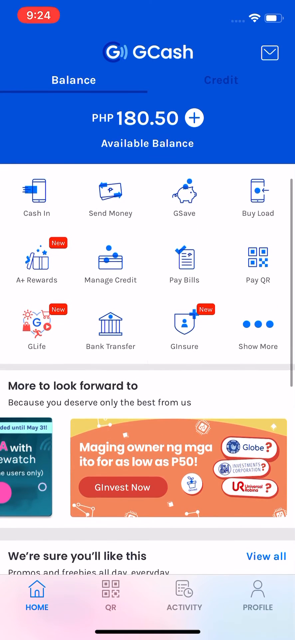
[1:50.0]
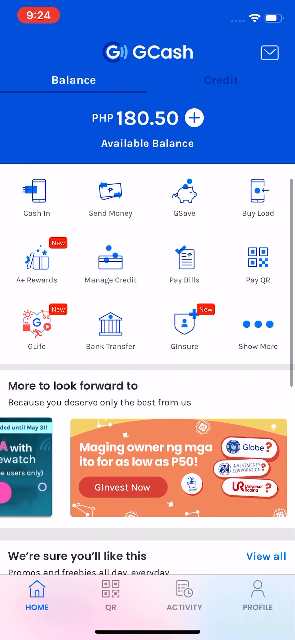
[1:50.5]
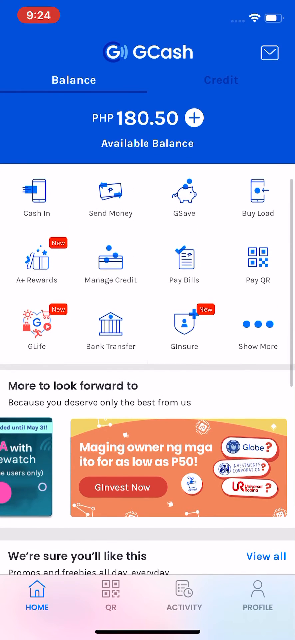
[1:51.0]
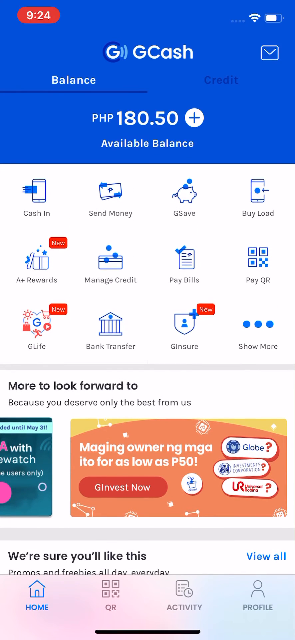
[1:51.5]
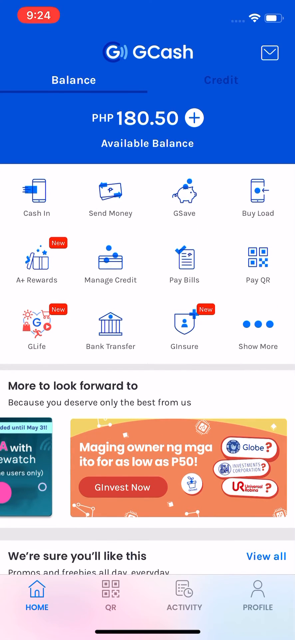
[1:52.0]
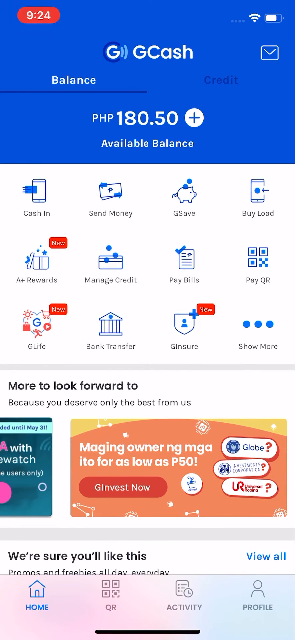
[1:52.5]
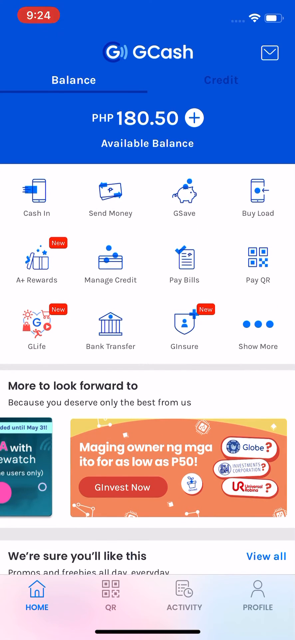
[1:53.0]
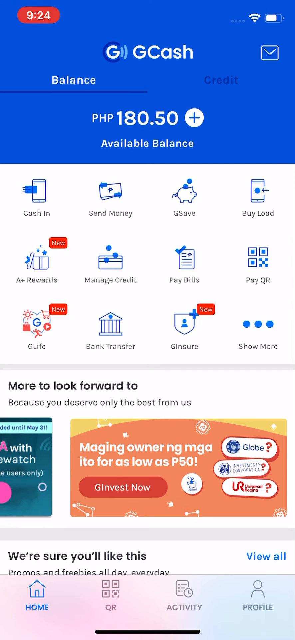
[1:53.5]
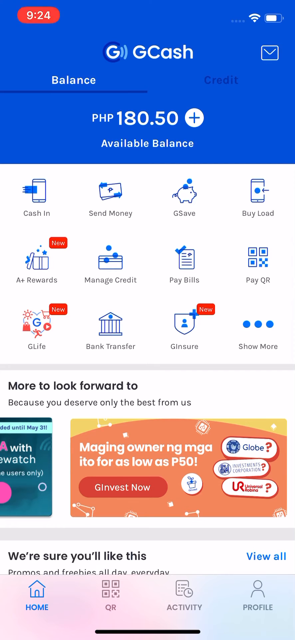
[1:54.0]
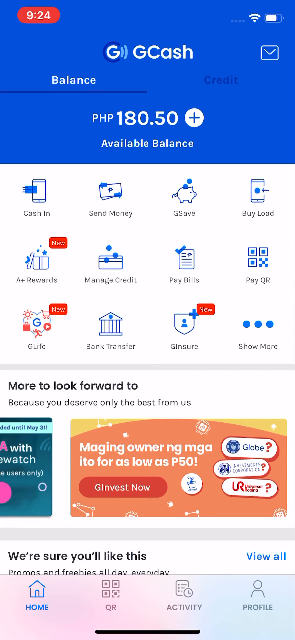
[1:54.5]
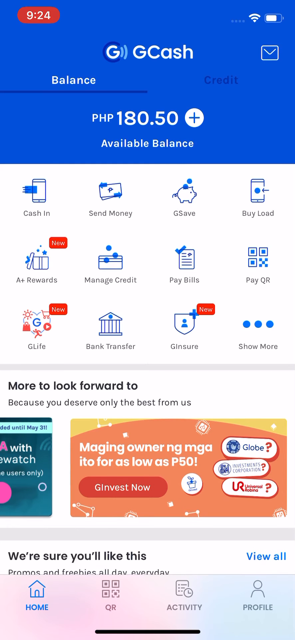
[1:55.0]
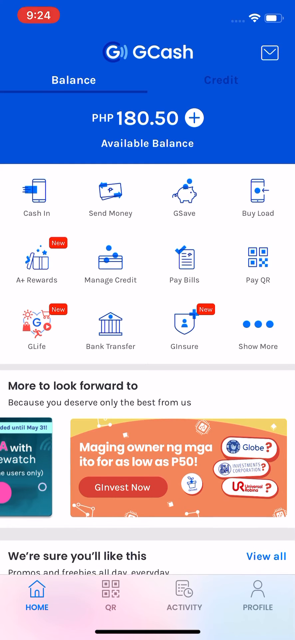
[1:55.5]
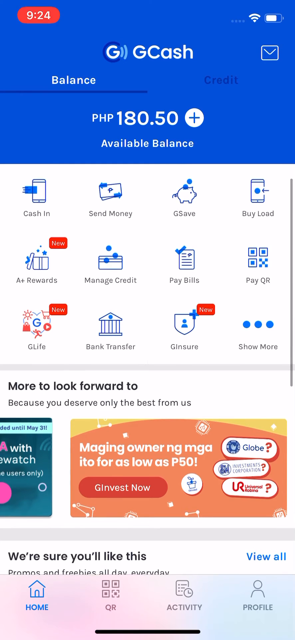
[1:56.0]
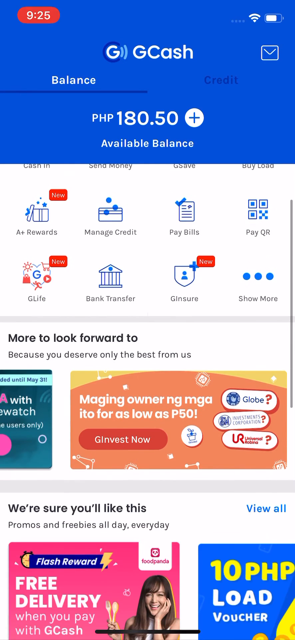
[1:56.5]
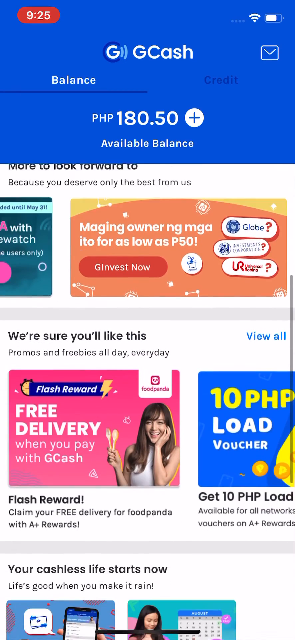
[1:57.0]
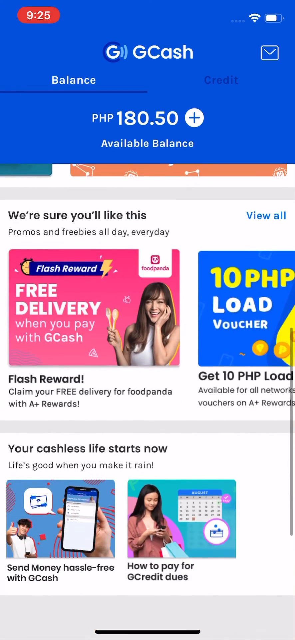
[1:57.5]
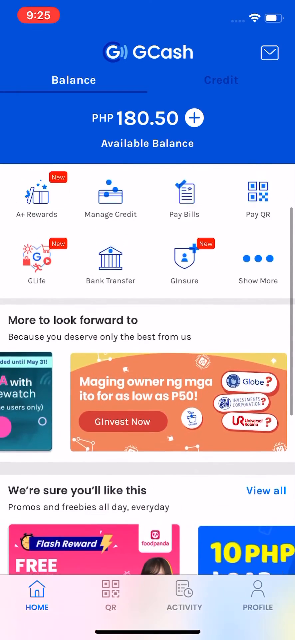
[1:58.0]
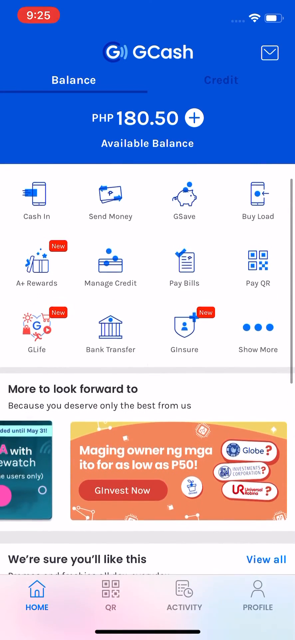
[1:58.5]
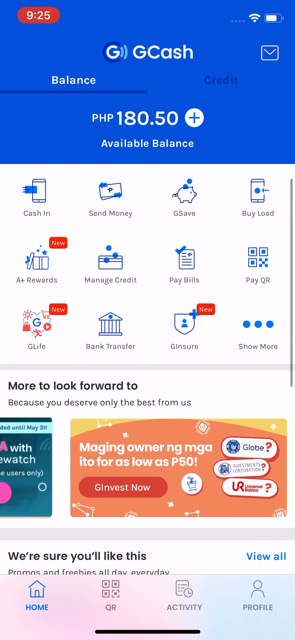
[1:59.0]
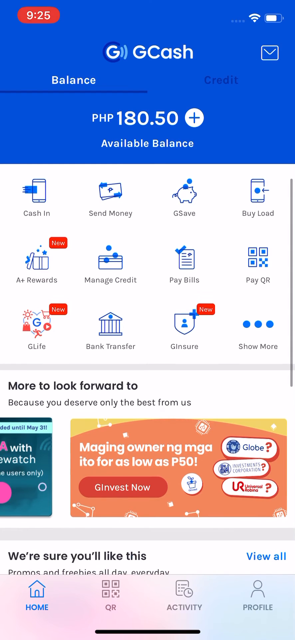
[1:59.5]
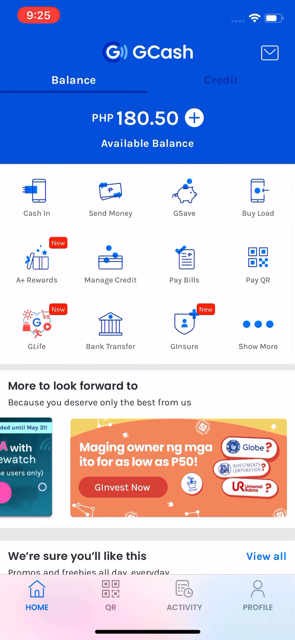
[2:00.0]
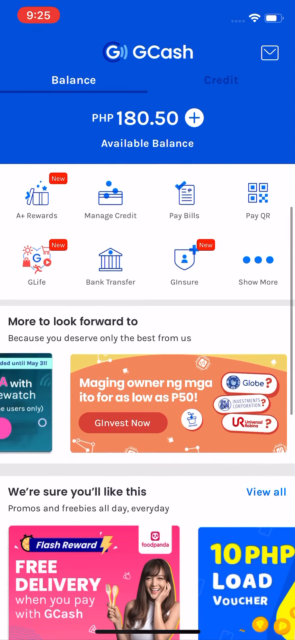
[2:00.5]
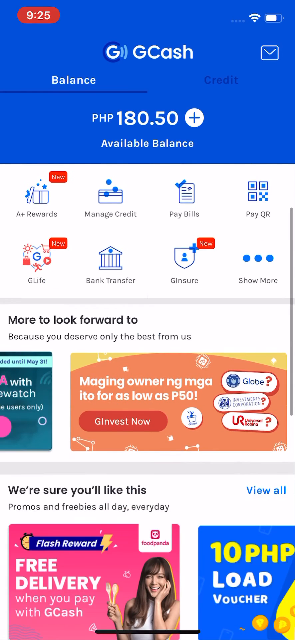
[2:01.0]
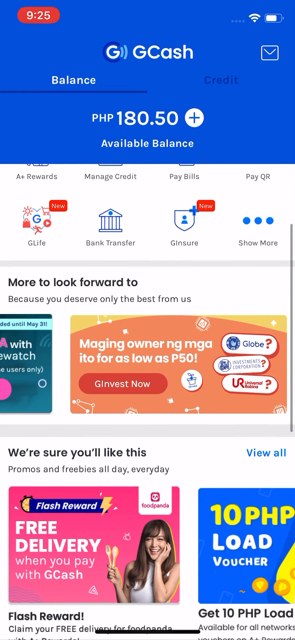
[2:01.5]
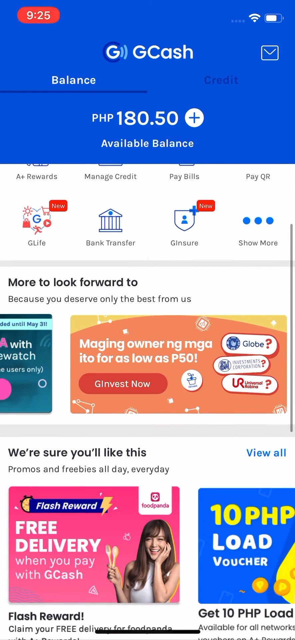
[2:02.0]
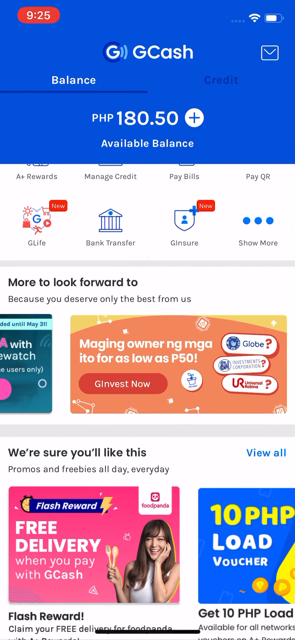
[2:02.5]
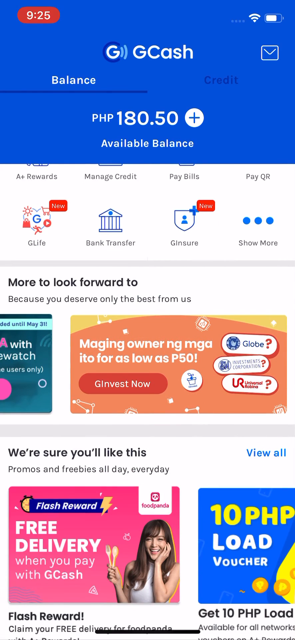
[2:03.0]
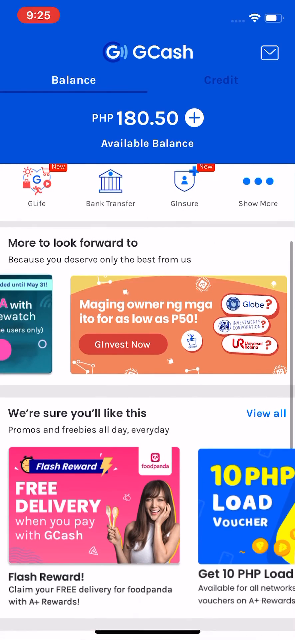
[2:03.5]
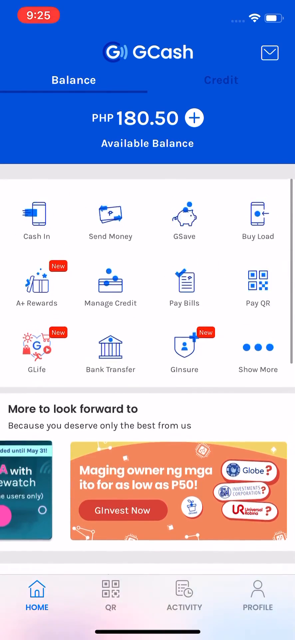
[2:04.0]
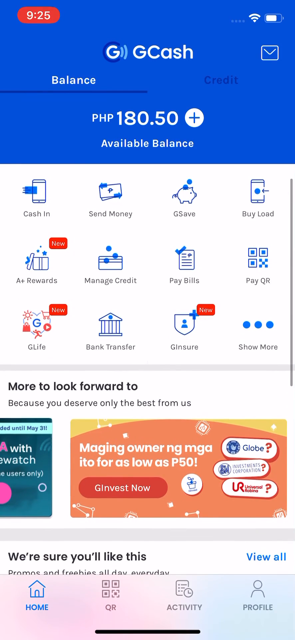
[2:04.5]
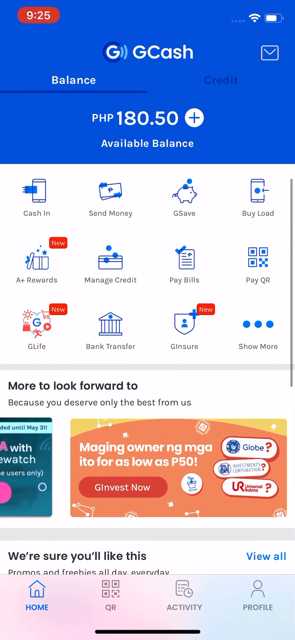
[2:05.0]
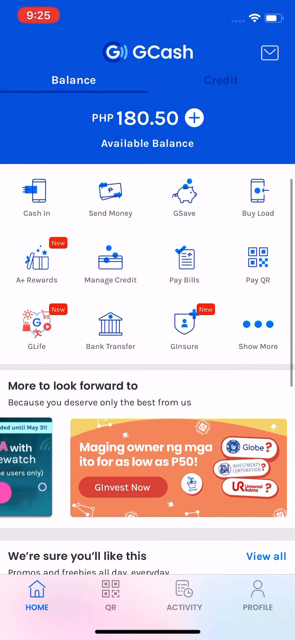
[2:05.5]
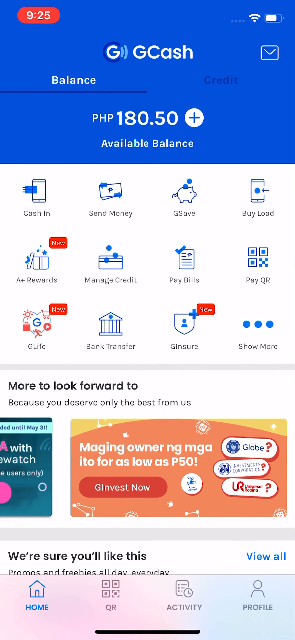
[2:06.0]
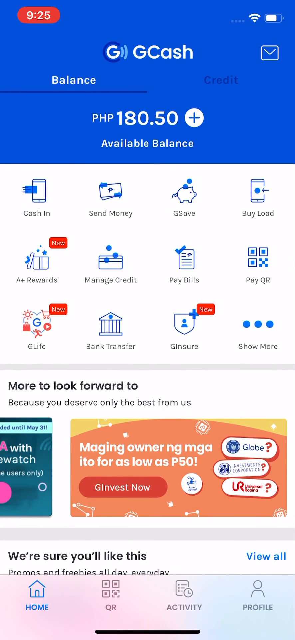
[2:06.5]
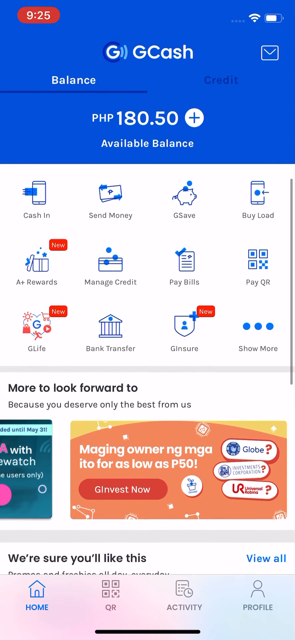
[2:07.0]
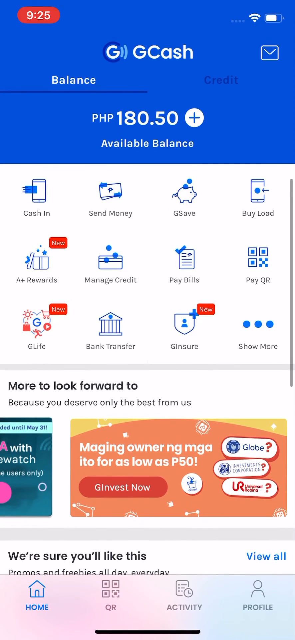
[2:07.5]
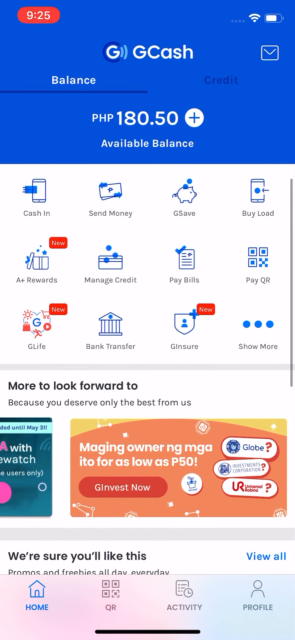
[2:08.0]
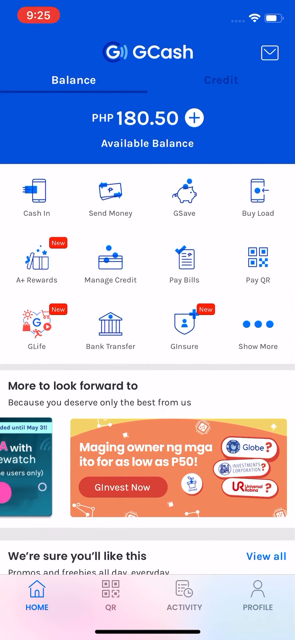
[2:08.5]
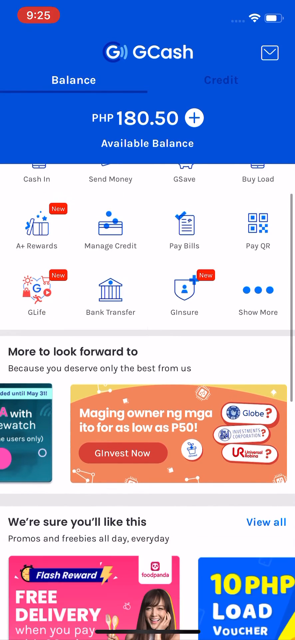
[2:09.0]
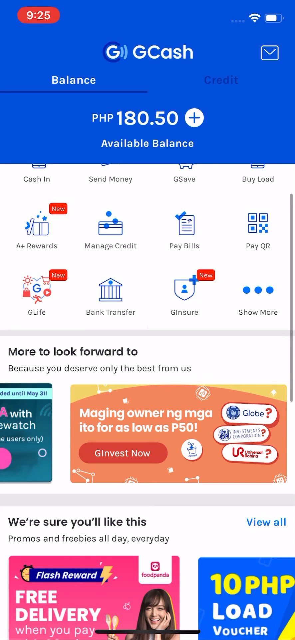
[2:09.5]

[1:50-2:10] The person is still on the homepage and scrolls down even further, then back to the top and back to the bottom. Another section of the homepage says "we're sure you'll like this," with an image of a young woman smiling and "free delivery" next to her. Also next to the woman is a blue square showing a 10 PHP load voucher, with a caption below reading "get 10 PHP load." Under the free delivery item it says "flash reward," and smaller text says "claim your free delivery" followed by words that are hard to read. Below is another box saying "your cashless life starts now," with subtext reading "life's good when you make it rain." Two smaller advertisement squares follow: one says "send money hassle-free with GCash," and the other shows an image of a woman next to a calendar.